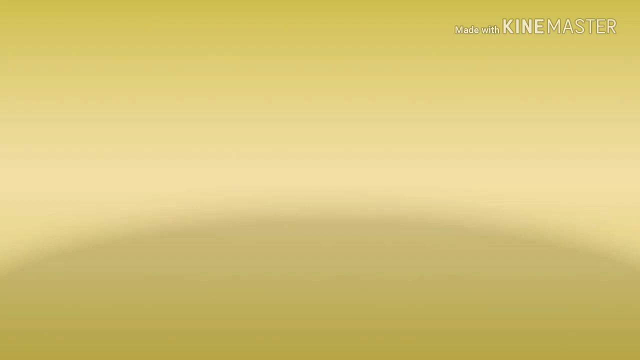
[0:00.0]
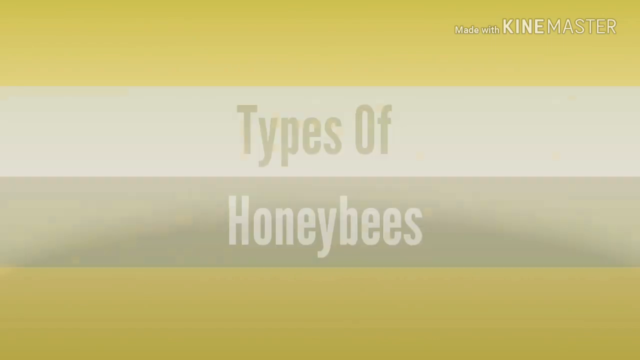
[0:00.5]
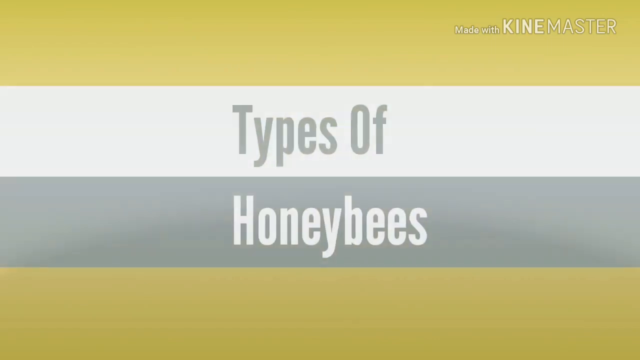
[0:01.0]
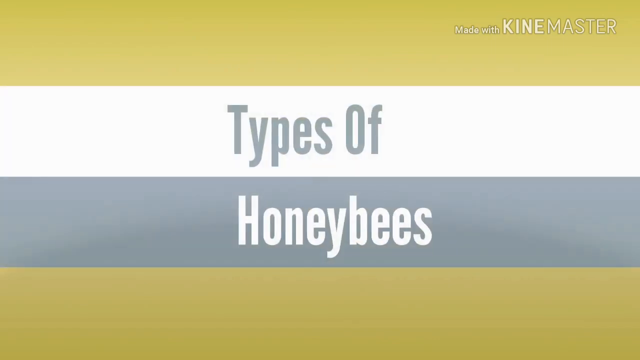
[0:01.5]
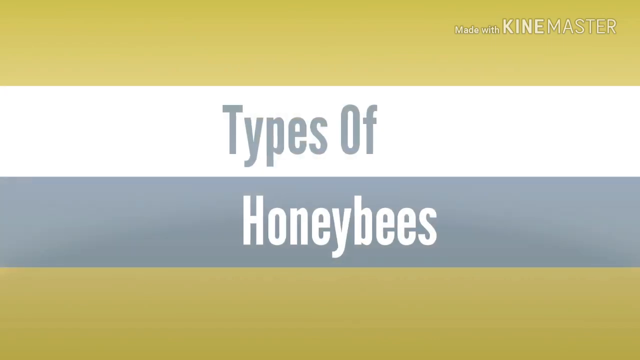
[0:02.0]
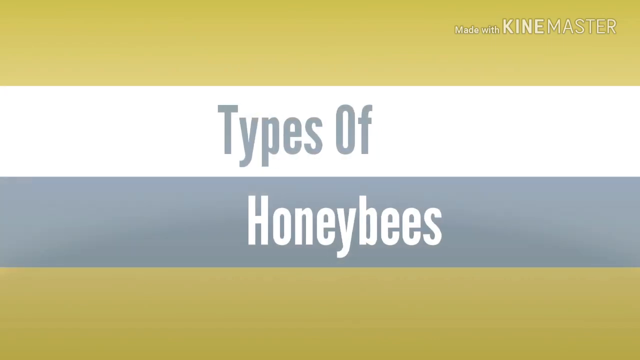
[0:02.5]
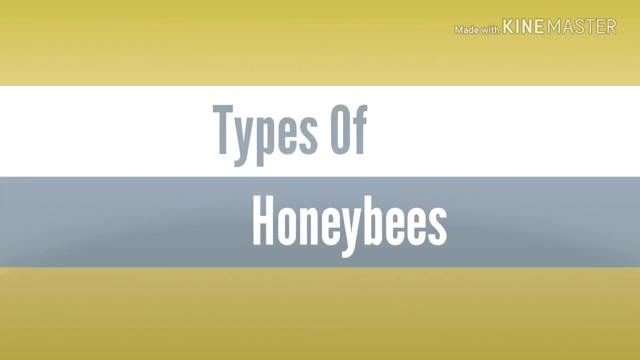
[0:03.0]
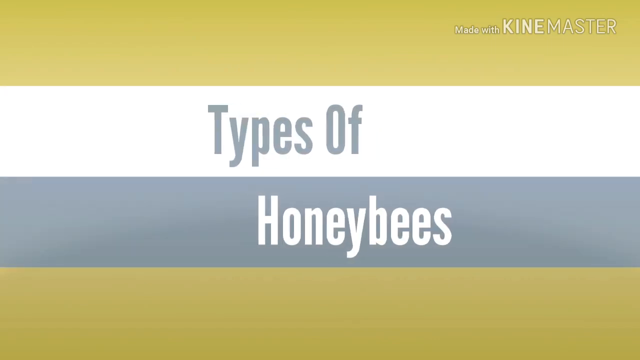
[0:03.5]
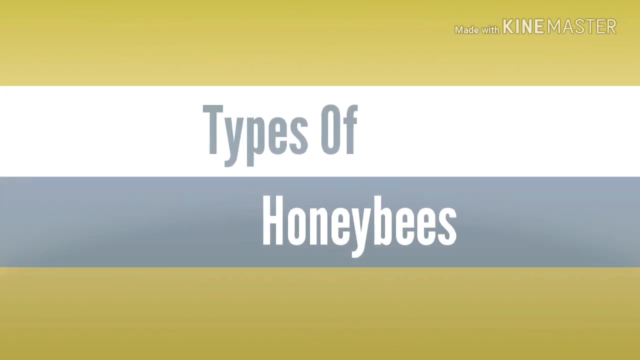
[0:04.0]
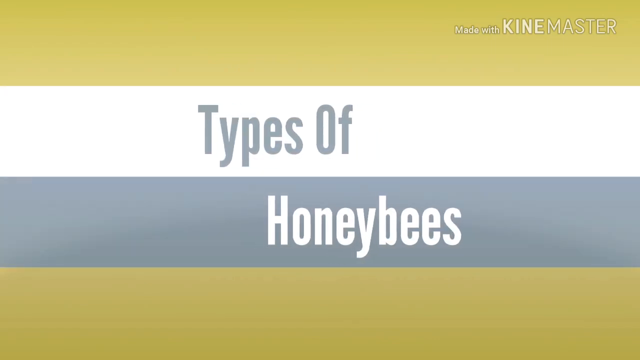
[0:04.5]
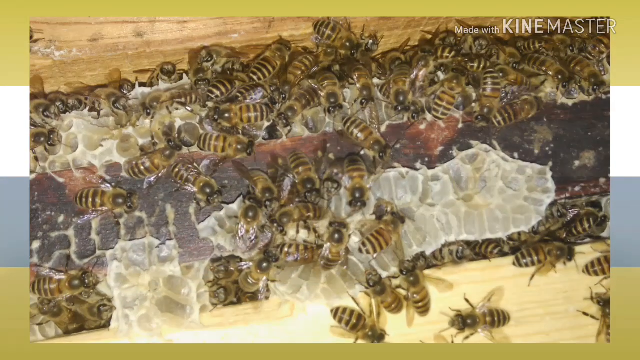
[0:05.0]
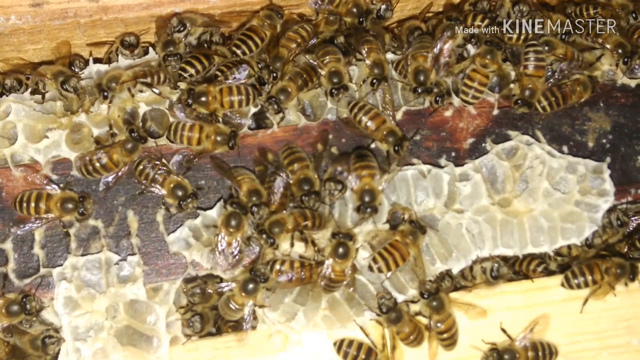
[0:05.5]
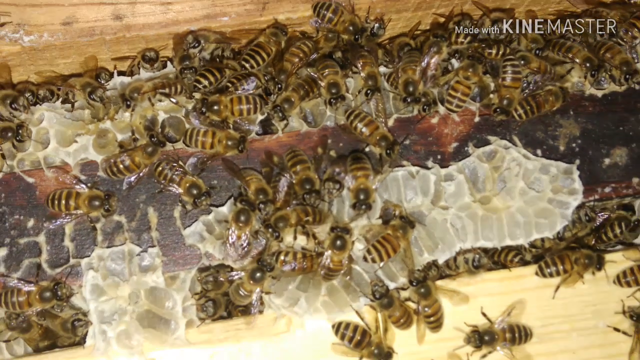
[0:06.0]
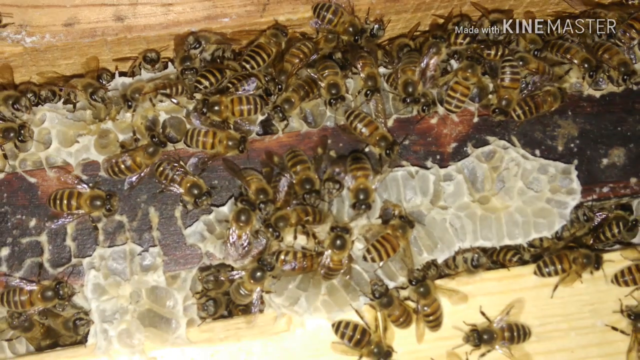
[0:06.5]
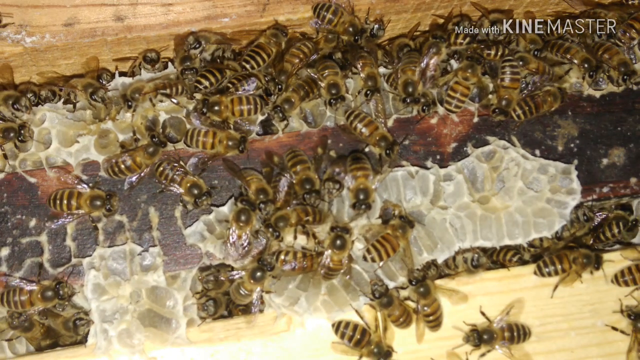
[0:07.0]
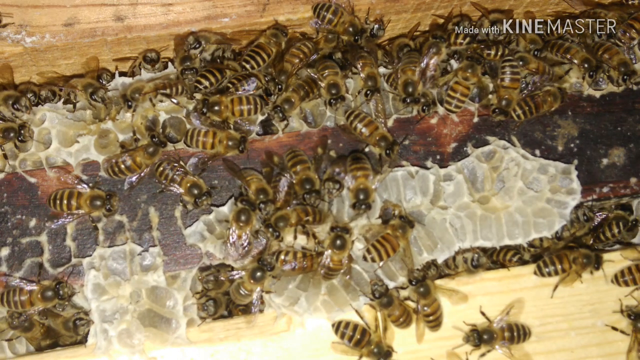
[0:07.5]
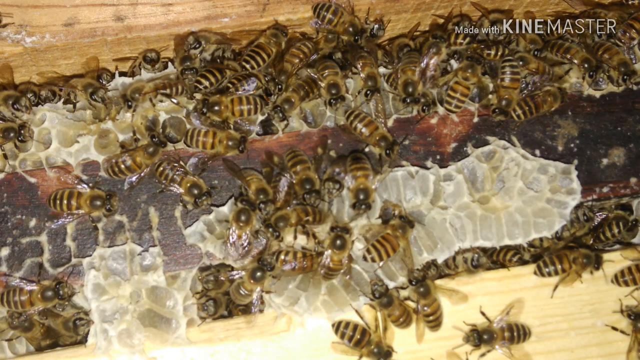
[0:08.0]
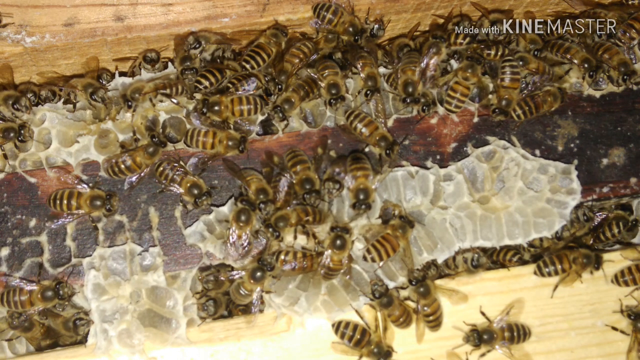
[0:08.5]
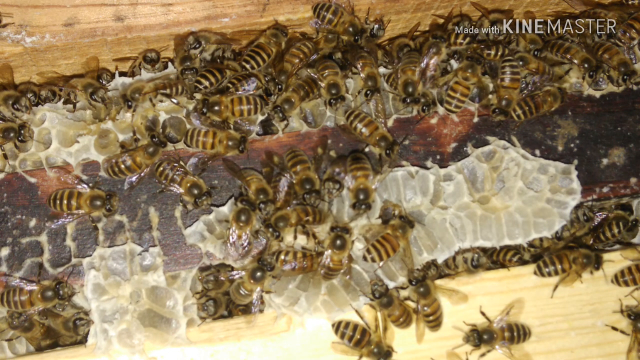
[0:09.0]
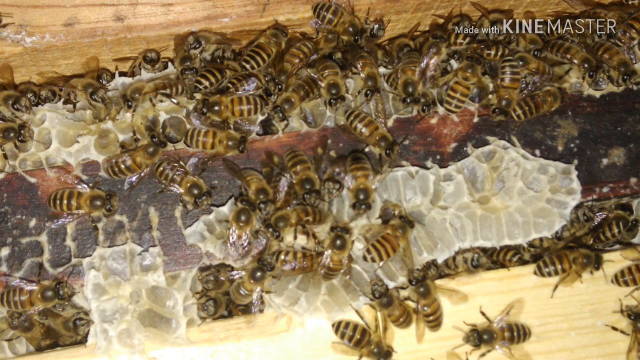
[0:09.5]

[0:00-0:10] The video opens with the text "types of honeybees", followed by footage of bees on the floor in honey and honeycombs. In the title, "types of" is written in grey on a white background, while "honeybees" is written in white on a grey background, set against a yellow background. At the top right it says "made with Kine Masters". Various bees are on the floor, with honeycombs and honey wax beneath them. The video fades back to a yellow background.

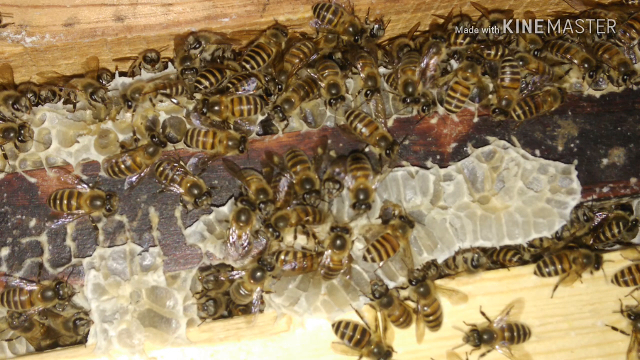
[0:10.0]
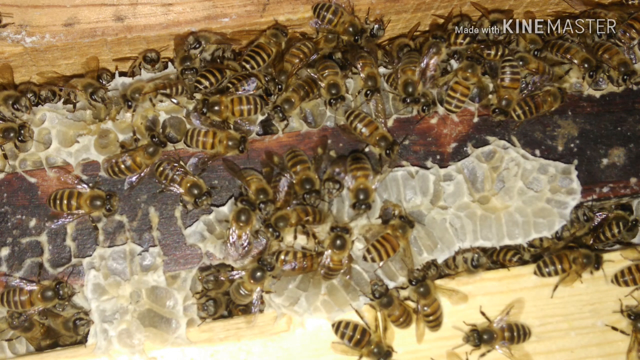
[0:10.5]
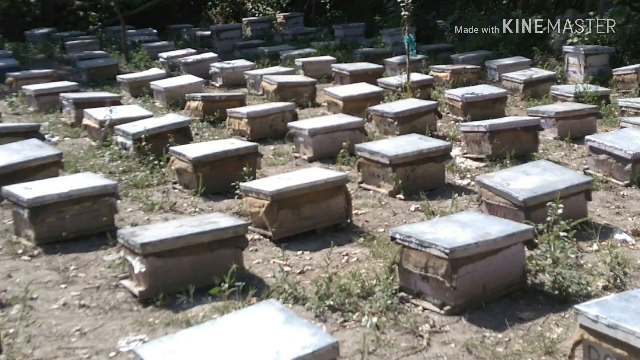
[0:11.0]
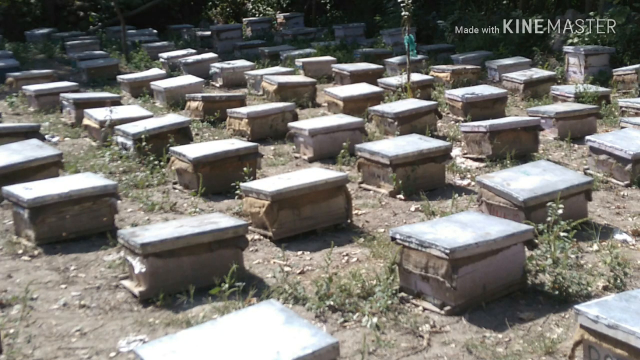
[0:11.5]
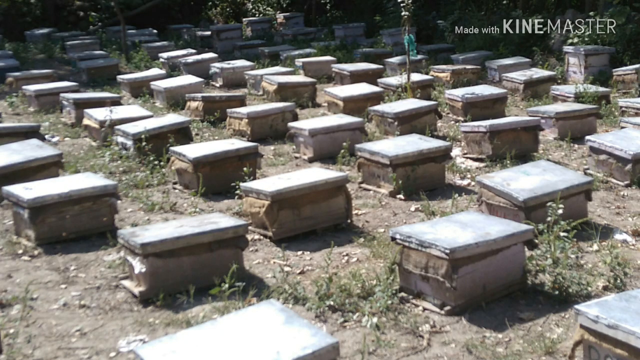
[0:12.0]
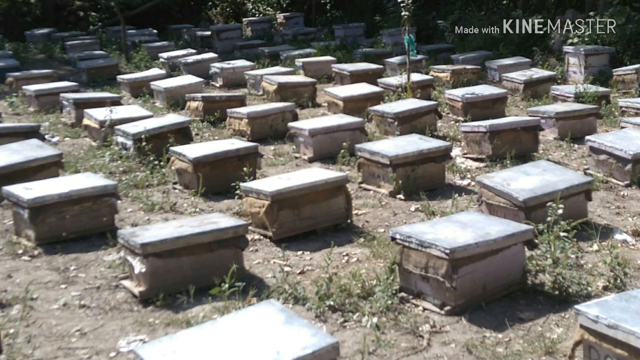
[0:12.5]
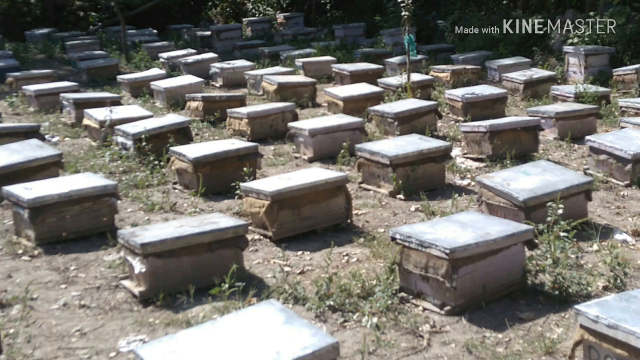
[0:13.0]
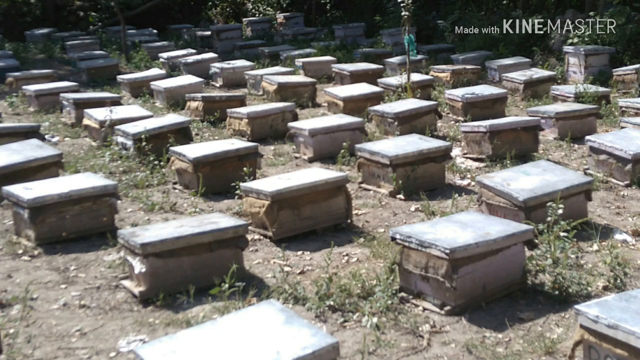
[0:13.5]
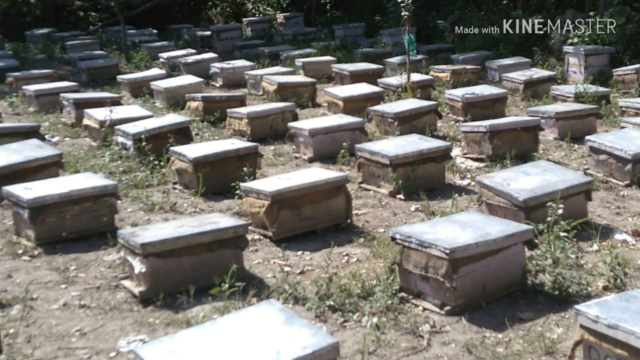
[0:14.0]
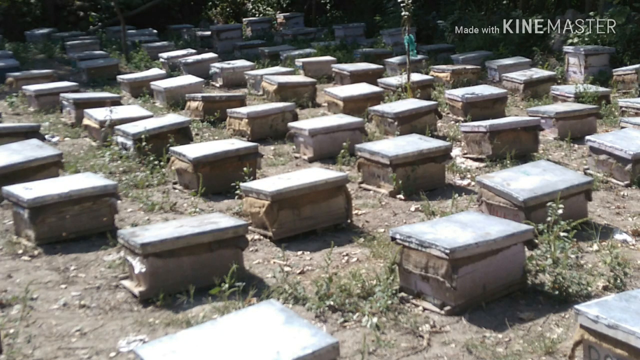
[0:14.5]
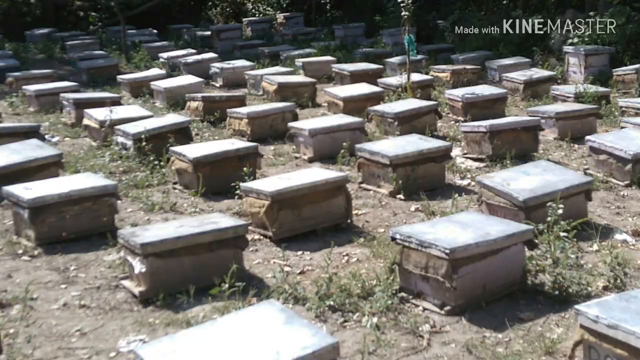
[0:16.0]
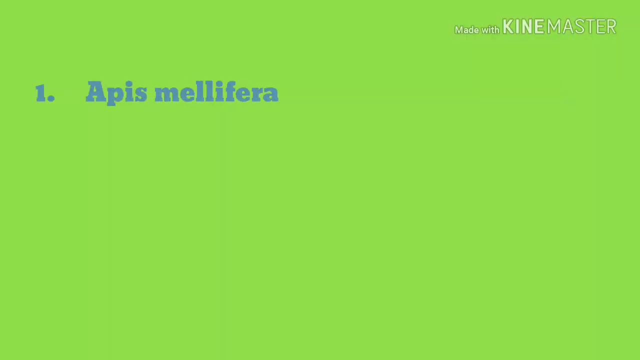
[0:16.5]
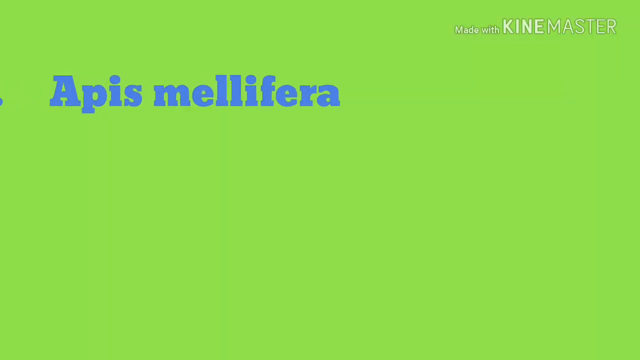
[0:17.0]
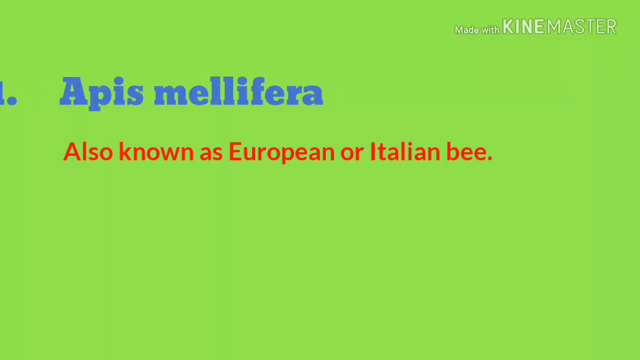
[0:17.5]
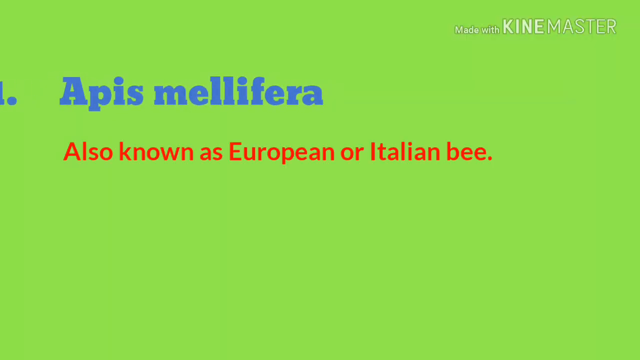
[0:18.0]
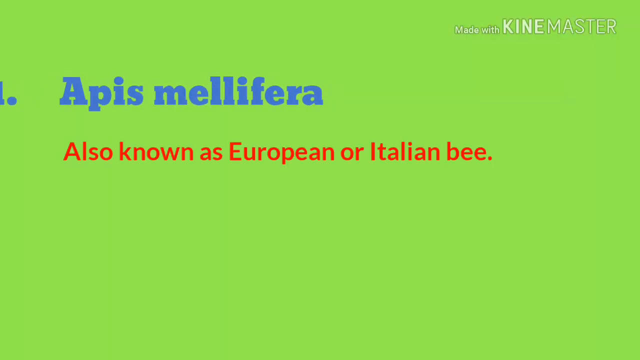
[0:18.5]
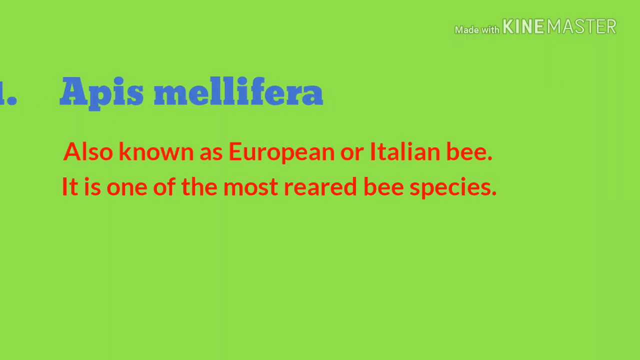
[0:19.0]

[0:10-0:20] A field holds numerous boxes, or tombstones, with few grasses and many boxes throughout it. In the top right corner it says "made with KineMasters". The video fades into a green background with text reading "Apis mellifera, also known as European or Italian bee. It is one of the most rare bee species." "Apis mellifera" is written in blue, while "also known as European" is written in red. The video then transitions to numerous bees on honeycombs, with honey on the floor. The bees are closely packed together and have wings. They have black stripes with a touch of yellow, and their heads look black.